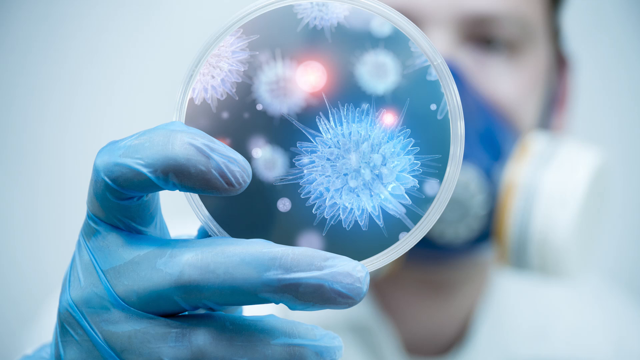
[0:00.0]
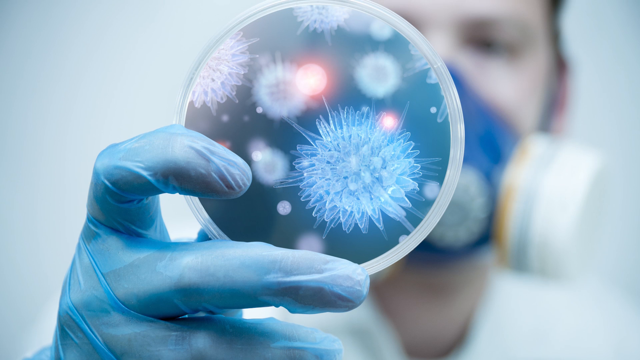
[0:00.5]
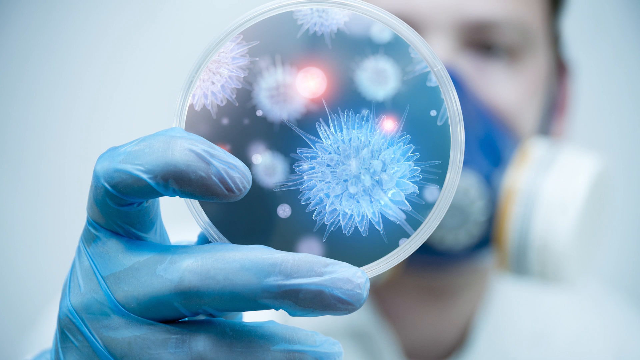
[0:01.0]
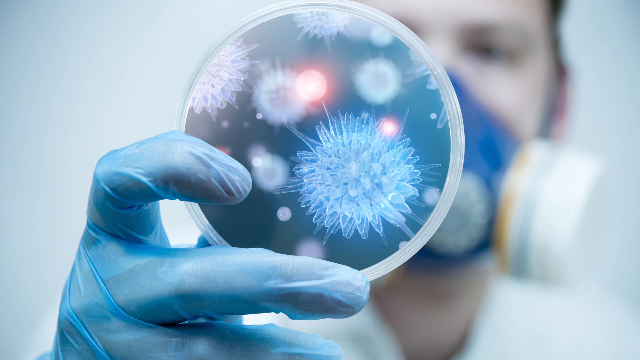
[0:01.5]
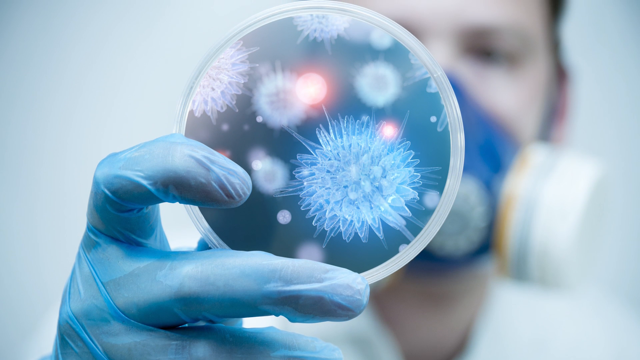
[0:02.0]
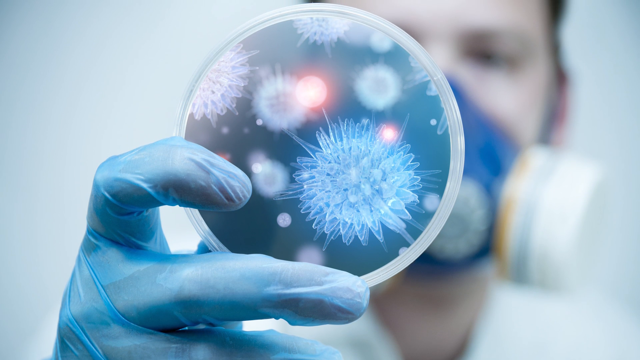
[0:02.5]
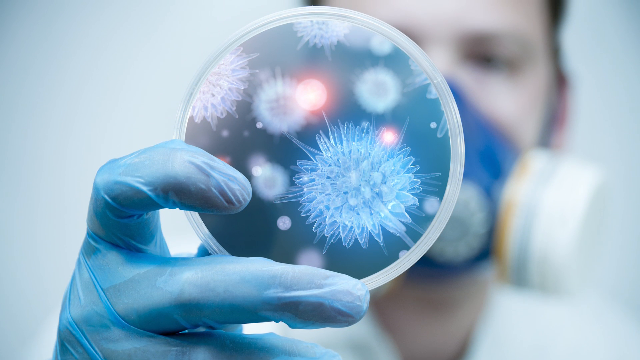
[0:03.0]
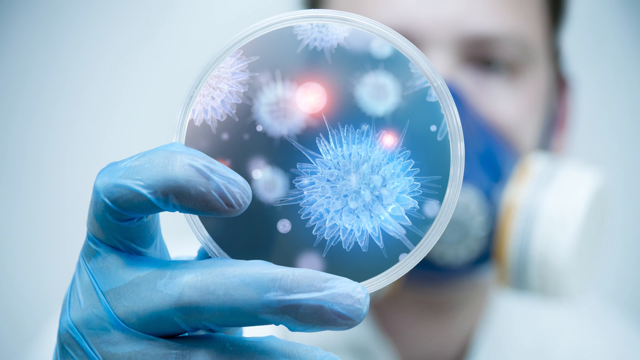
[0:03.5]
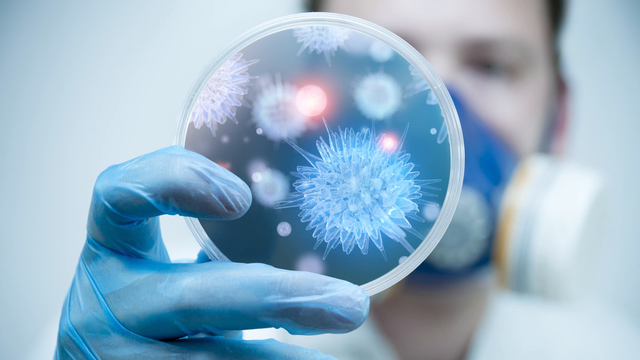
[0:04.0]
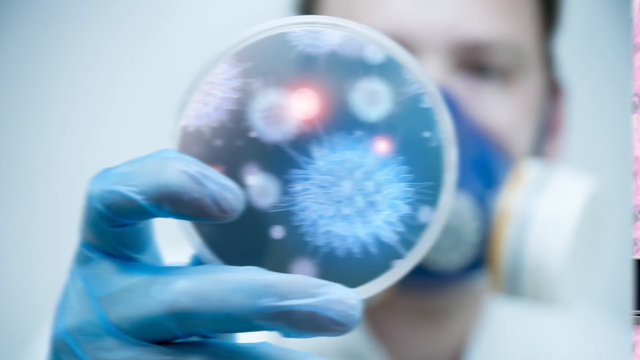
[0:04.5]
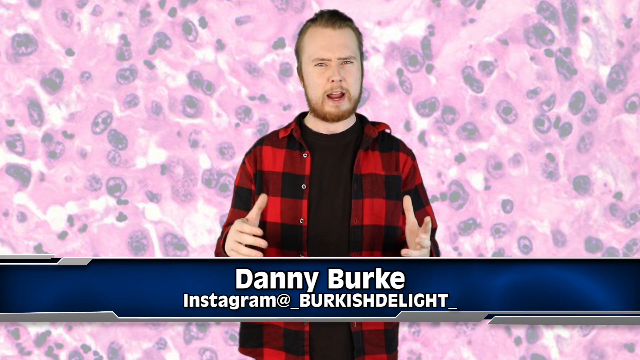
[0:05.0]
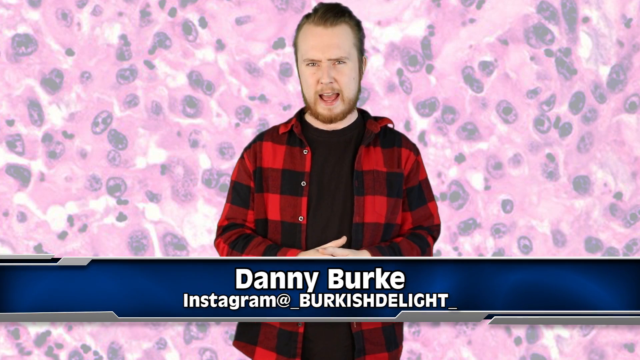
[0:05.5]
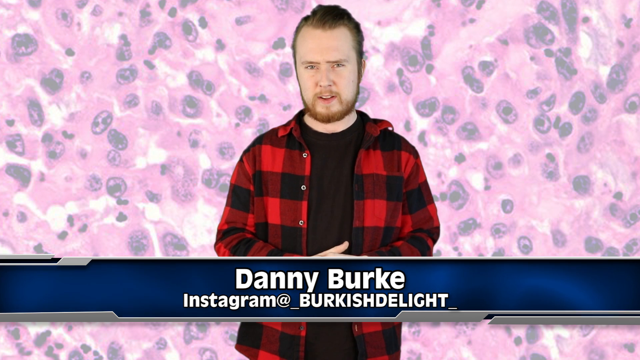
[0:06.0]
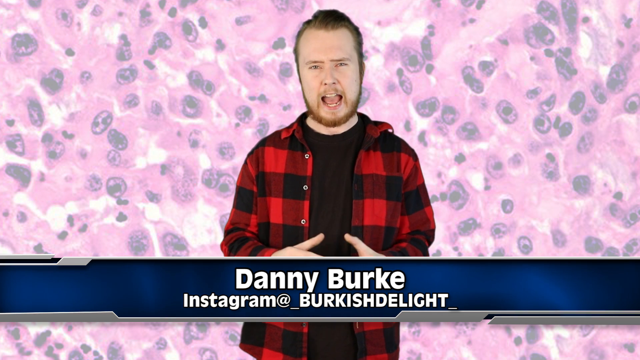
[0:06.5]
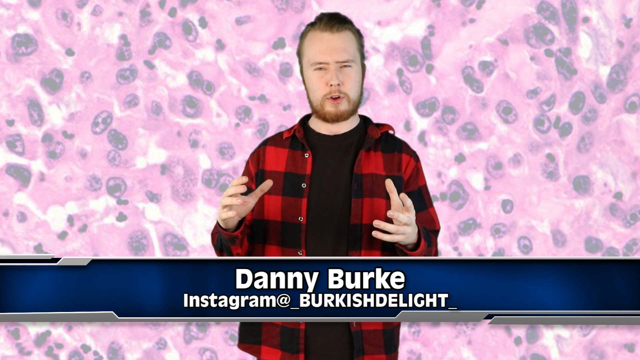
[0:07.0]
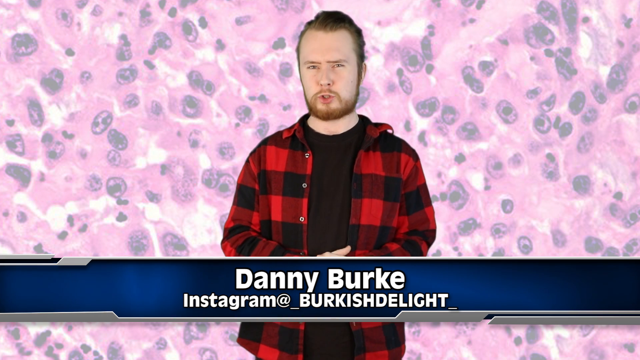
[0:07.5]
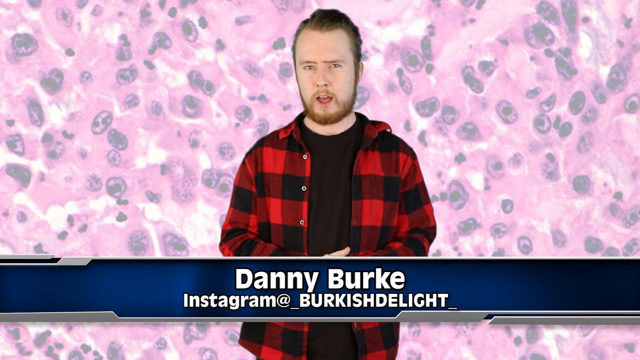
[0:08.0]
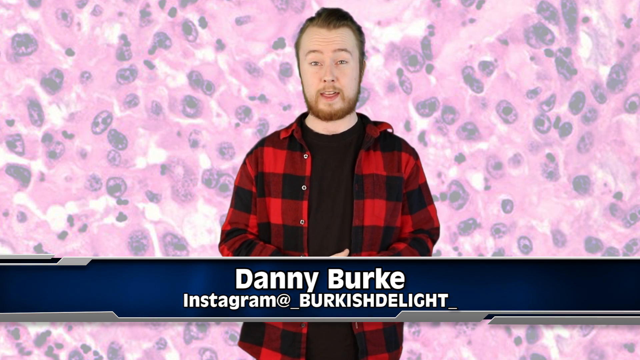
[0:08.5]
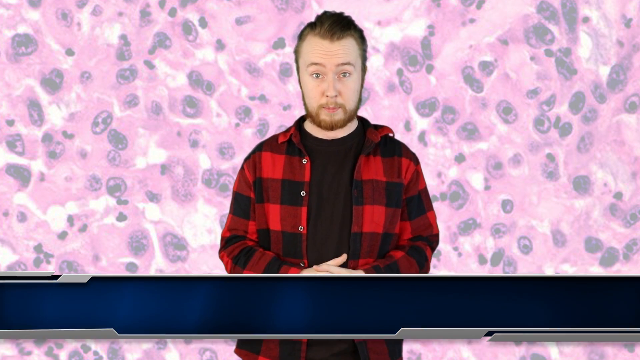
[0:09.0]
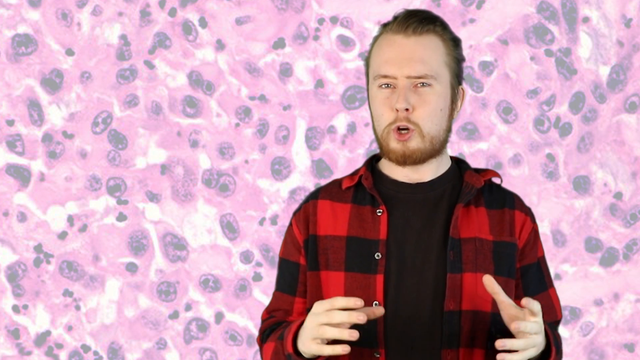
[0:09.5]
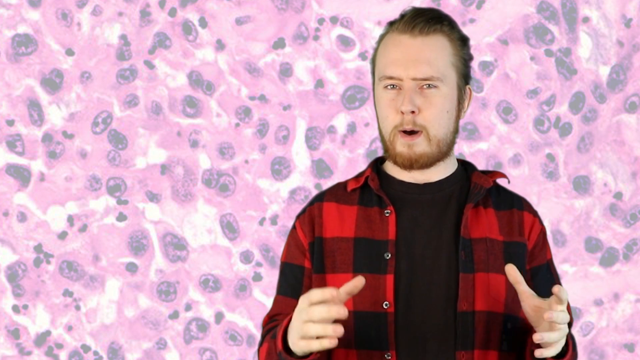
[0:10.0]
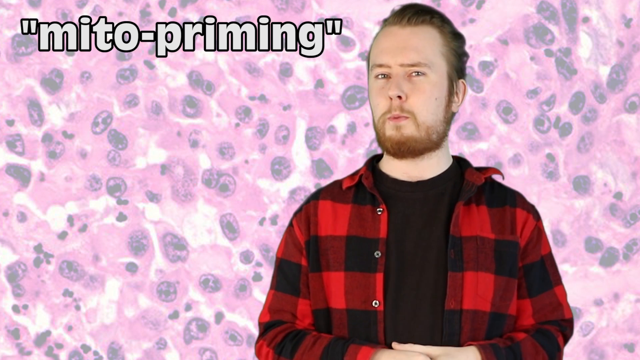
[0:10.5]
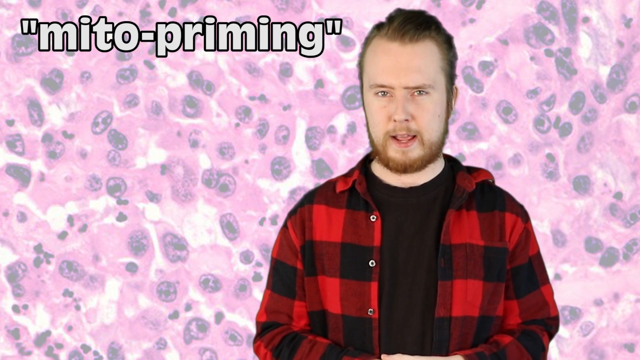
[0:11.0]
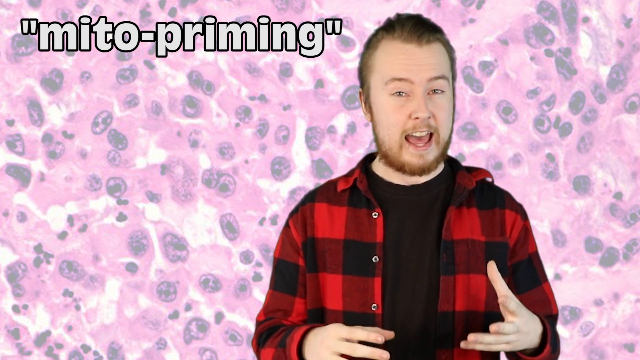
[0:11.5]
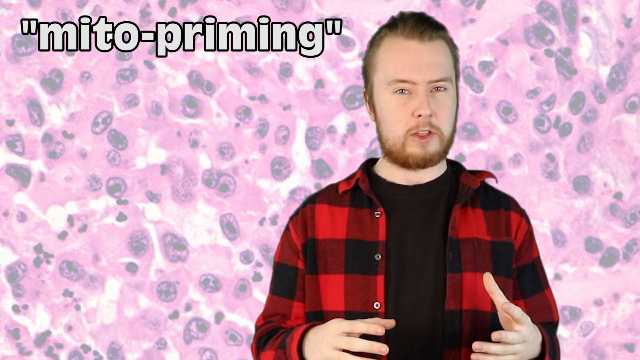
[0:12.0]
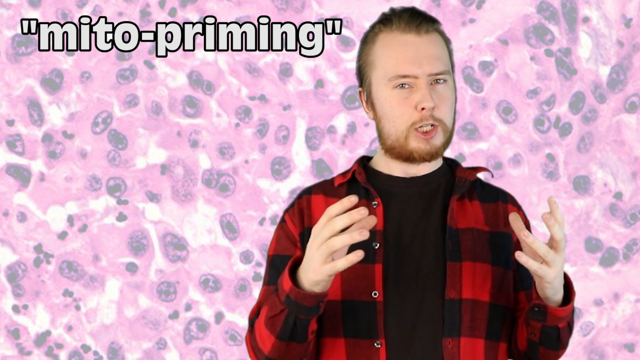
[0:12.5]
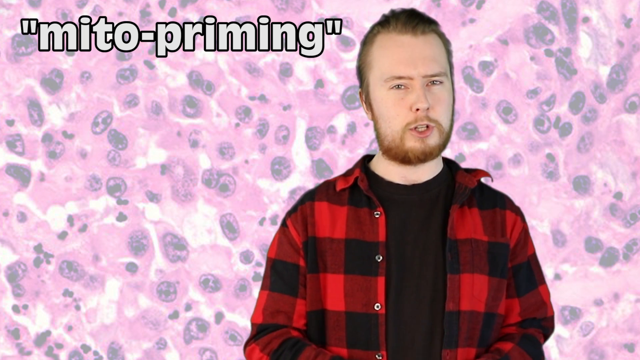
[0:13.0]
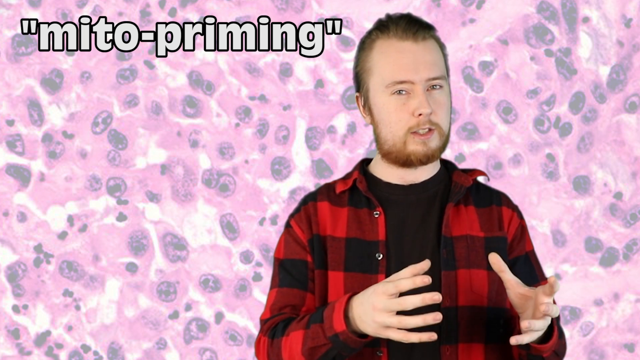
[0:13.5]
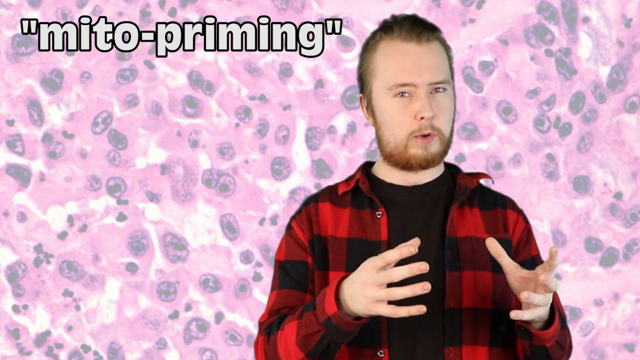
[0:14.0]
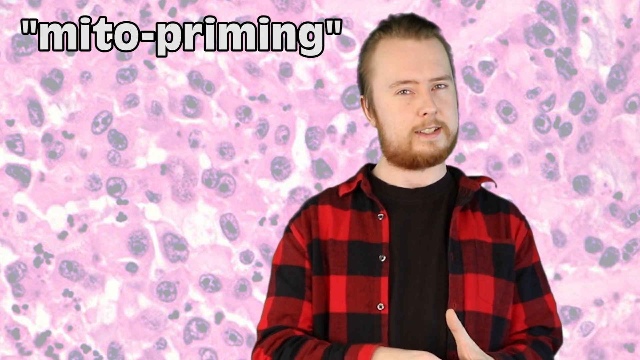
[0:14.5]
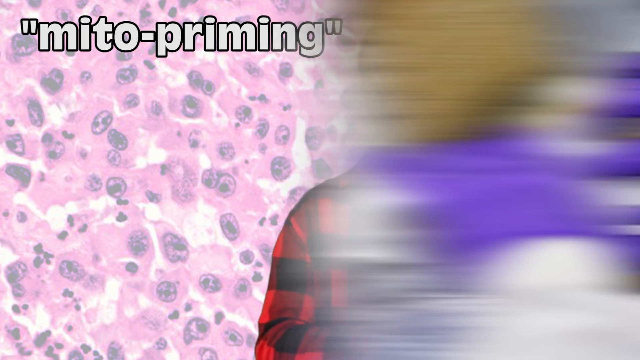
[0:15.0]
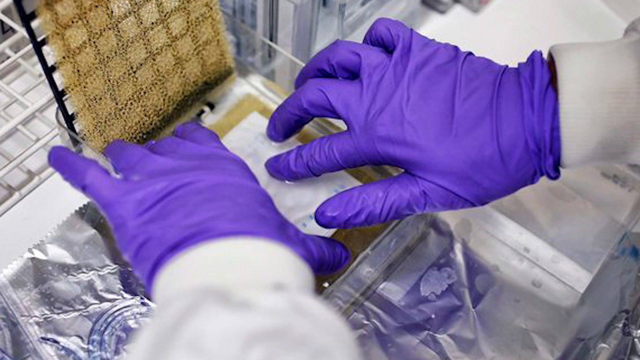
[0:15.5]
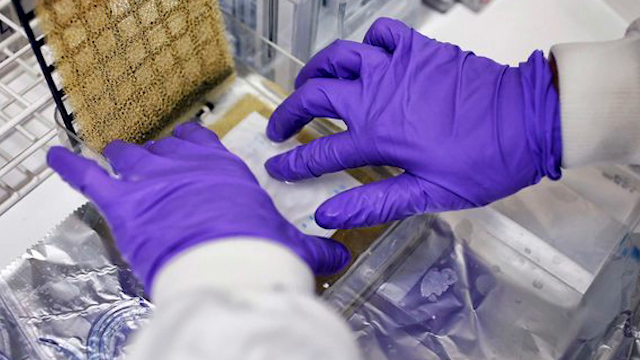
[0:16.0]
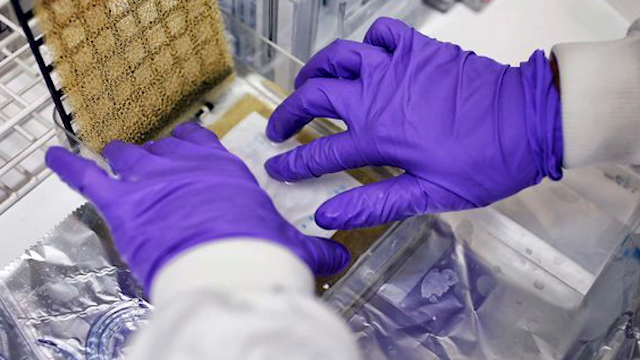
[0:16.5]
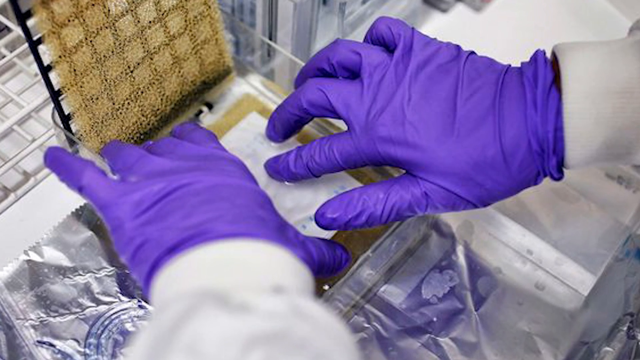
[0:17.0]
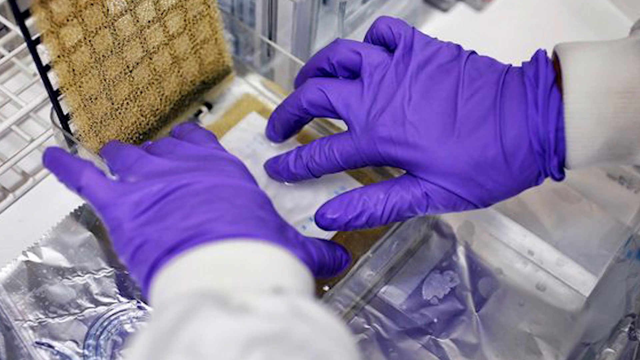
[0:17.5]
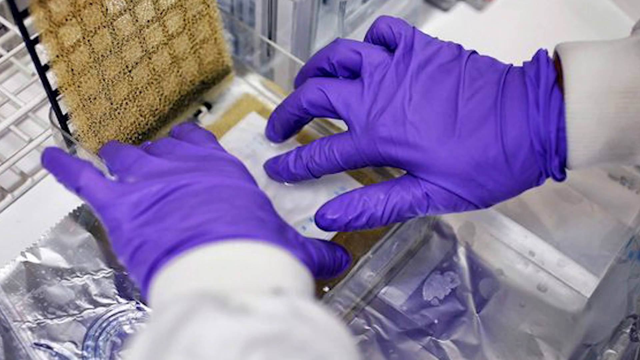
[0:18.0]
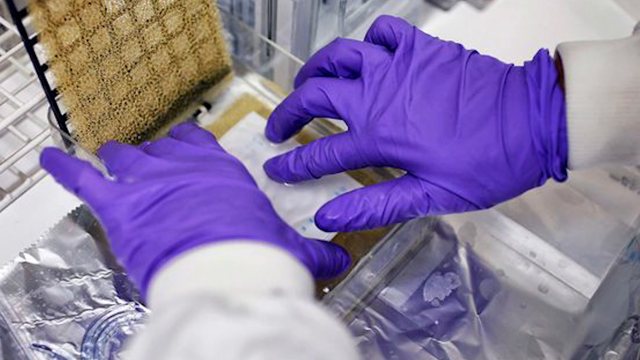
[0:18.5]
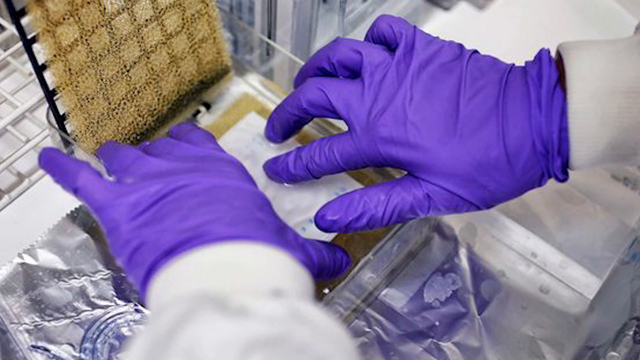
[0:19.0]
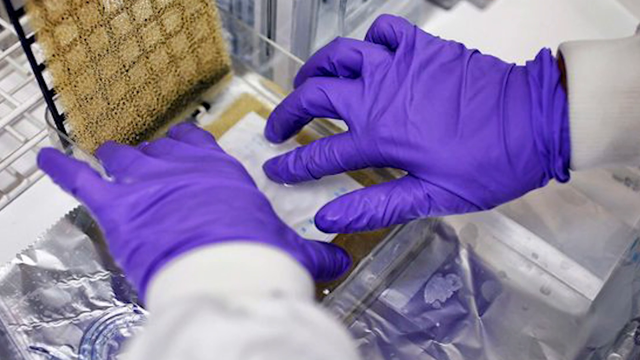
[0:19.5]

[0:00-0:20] Someone holds up a blue circle that appears to contain a bunch of crystals. Their fingers are visible on the left side, wearing a blue plastic glove. Behind it is the person's face, quite blurry, with a mask on that has big white vents on the side; the blue object covers part of the face. The camera slowly pans up a little. The video then cuts to a man talking straight into the camera. In the background behind him are pink and gray colors that look like part of a petri dish. A banner across the bottom shows his name and reads "Danny Burke, Instagram, at _Burke ish delight". He is a Caucasian man with light brown hair and a beard, wearing a red plaid shirt. At one point he raises his hands as he talks. The banner disappears and he shifts slightly to the right, still using his hands a lot. As he speaks, text in quotation marks appears in the upper left corner: "mito priming". He stays very animated, moving his open hands up and down. The video then cuts to hands in what looks like a square petri dish; the hands wear dark purple gloves, and the wrists are covered by the white edges of sleeves.